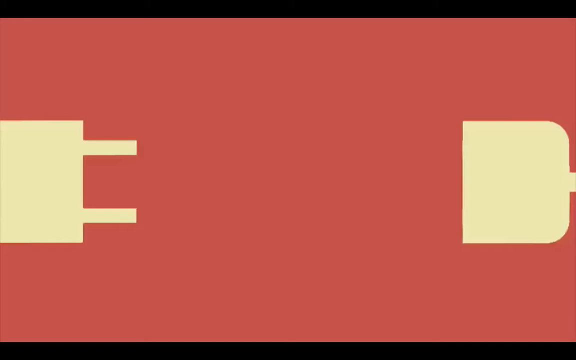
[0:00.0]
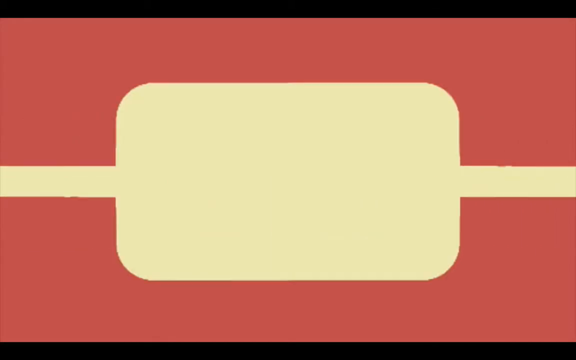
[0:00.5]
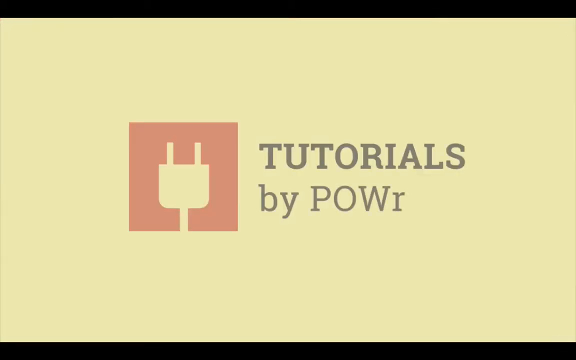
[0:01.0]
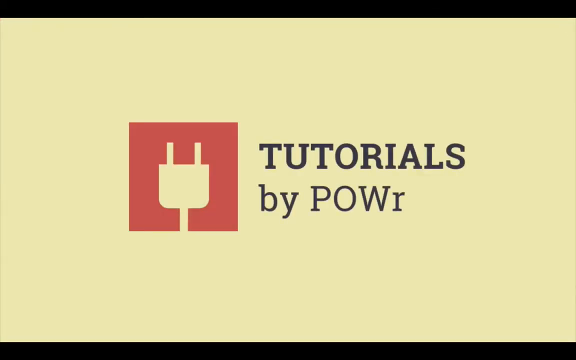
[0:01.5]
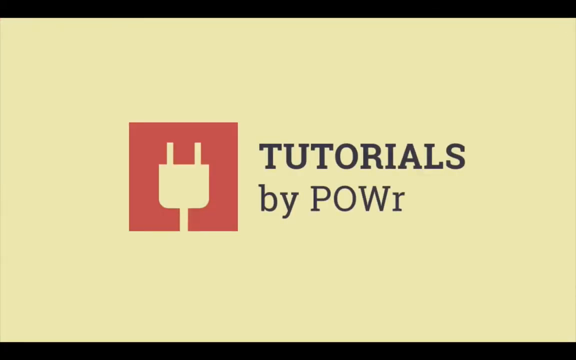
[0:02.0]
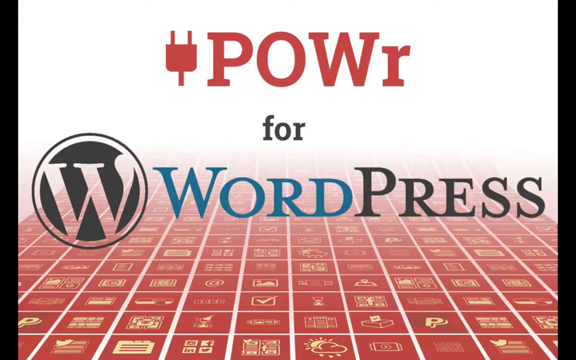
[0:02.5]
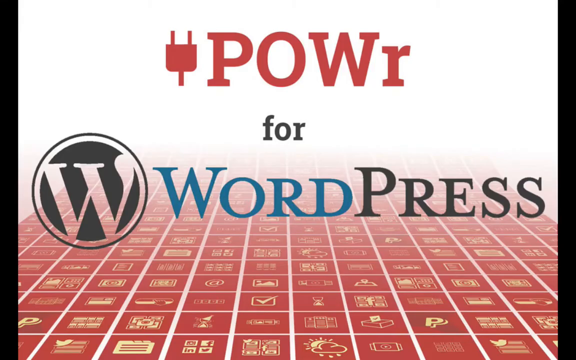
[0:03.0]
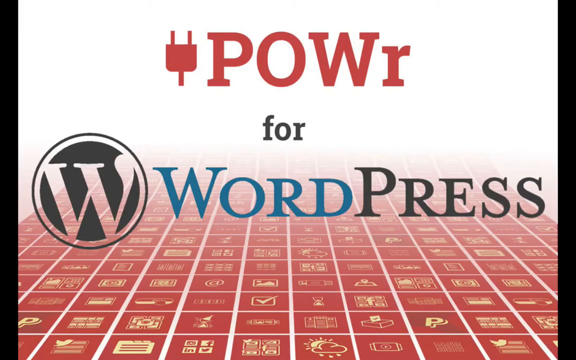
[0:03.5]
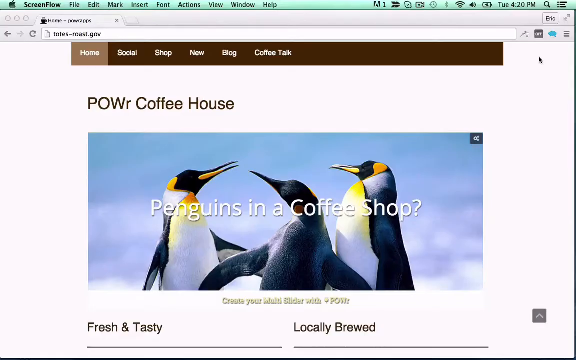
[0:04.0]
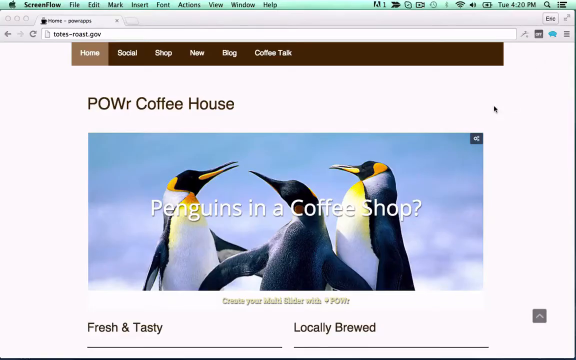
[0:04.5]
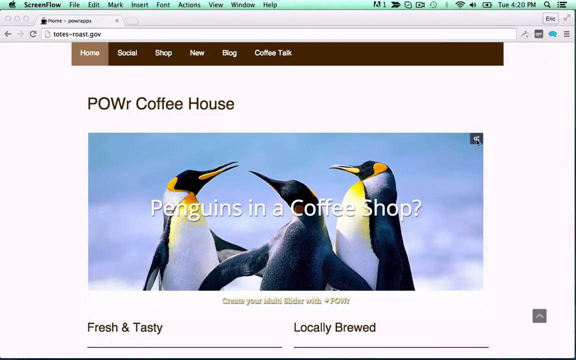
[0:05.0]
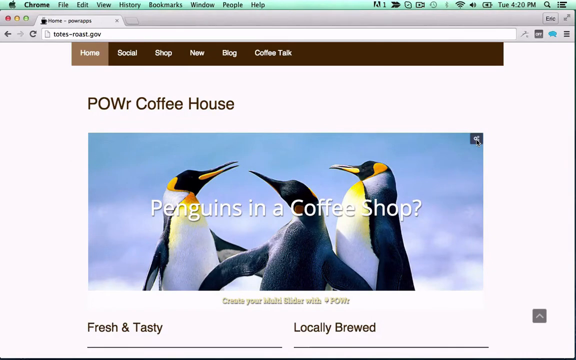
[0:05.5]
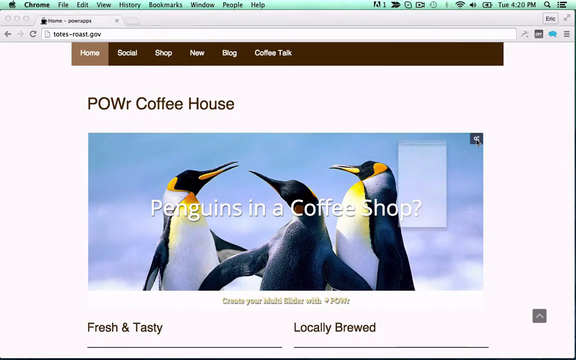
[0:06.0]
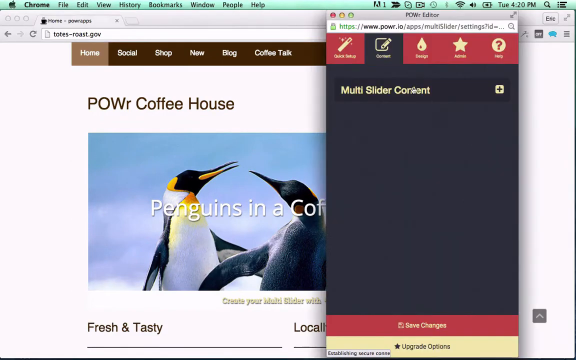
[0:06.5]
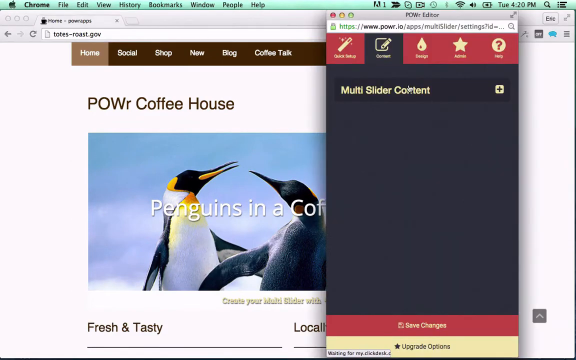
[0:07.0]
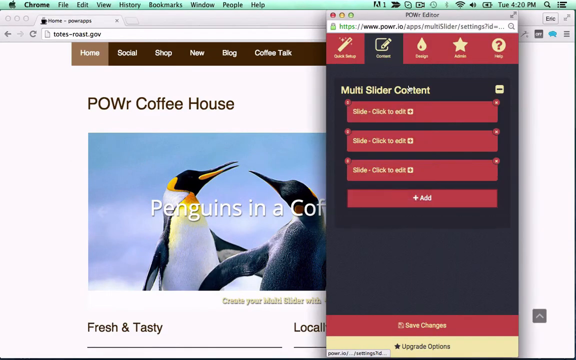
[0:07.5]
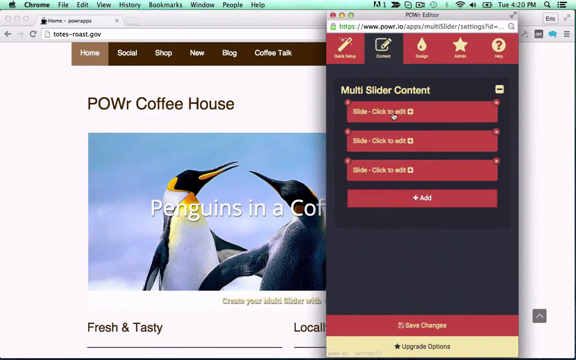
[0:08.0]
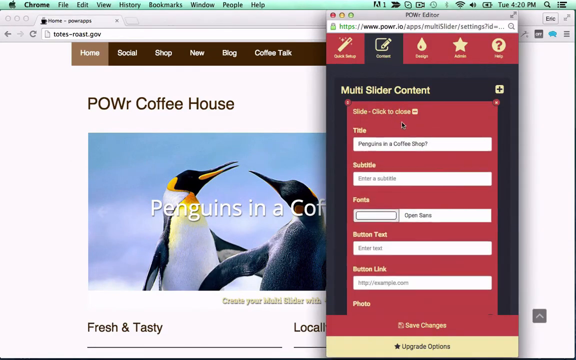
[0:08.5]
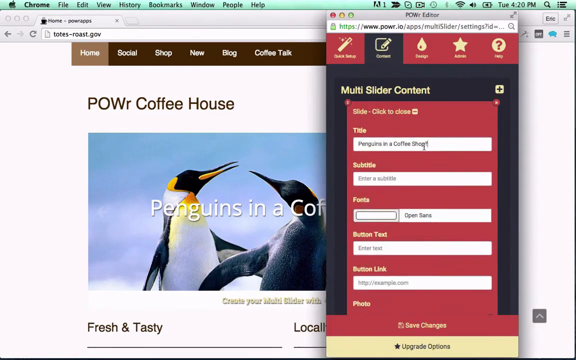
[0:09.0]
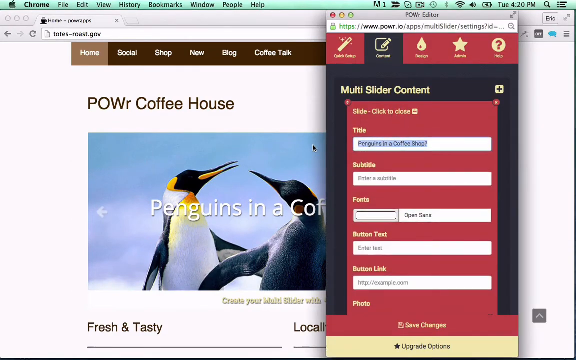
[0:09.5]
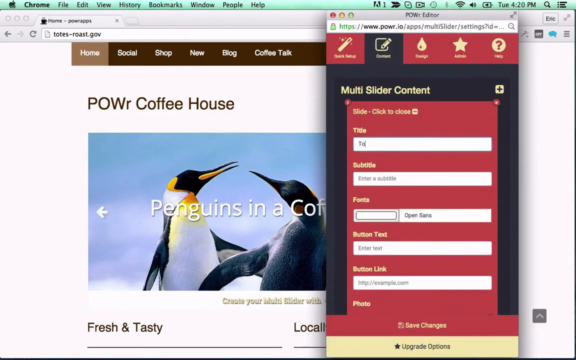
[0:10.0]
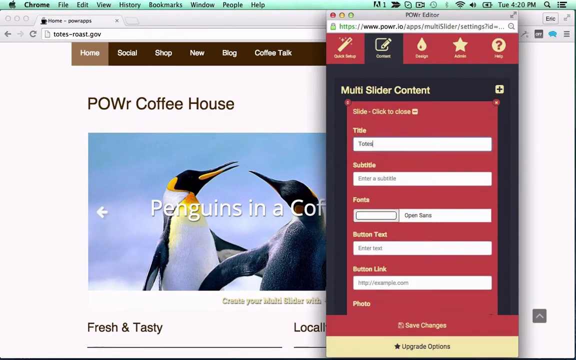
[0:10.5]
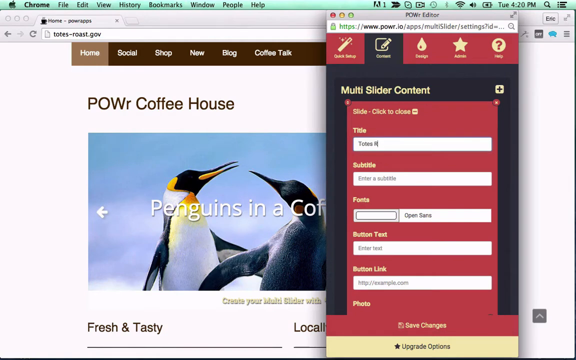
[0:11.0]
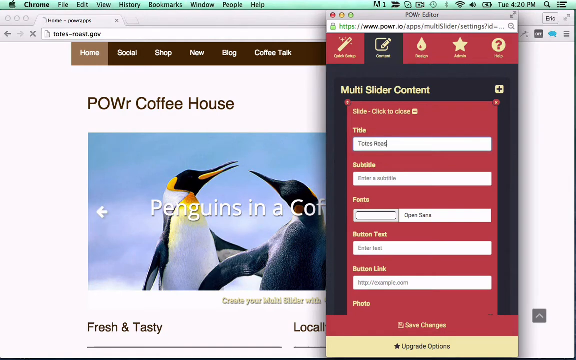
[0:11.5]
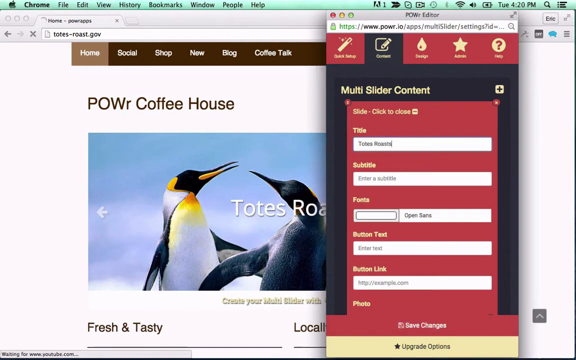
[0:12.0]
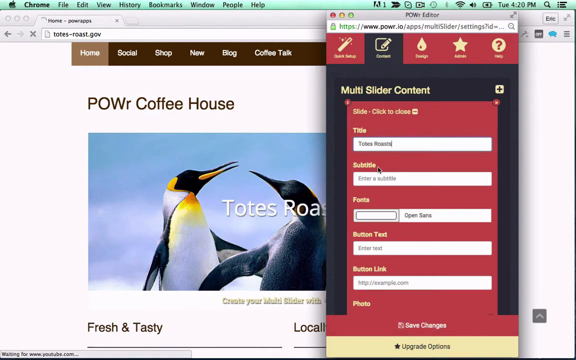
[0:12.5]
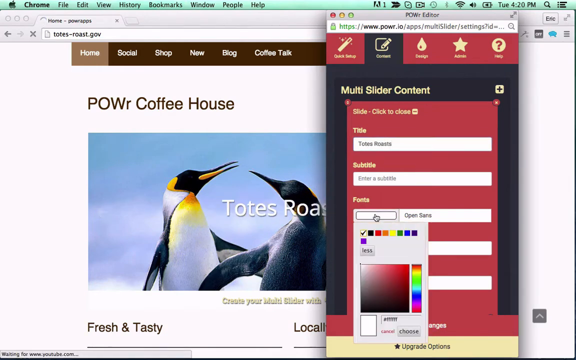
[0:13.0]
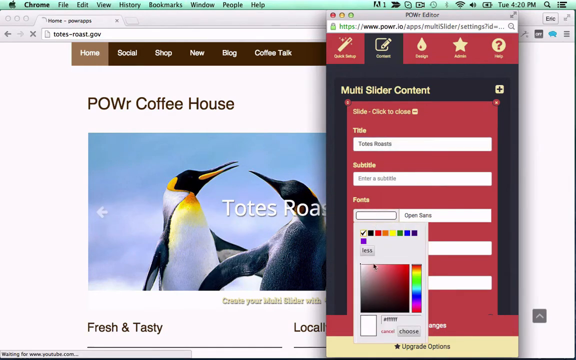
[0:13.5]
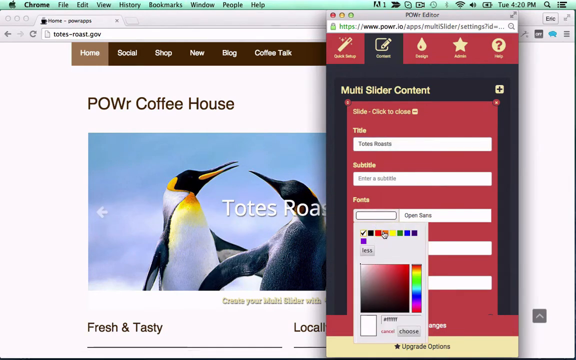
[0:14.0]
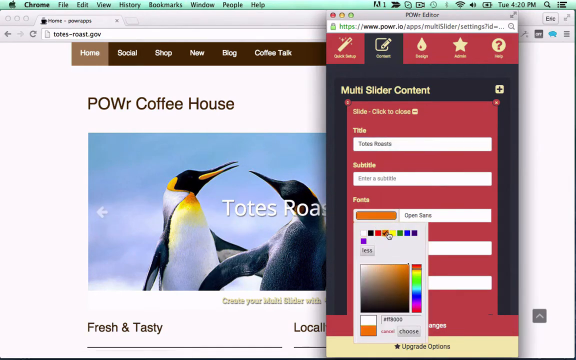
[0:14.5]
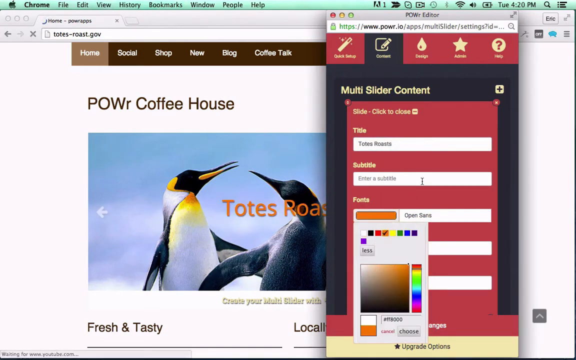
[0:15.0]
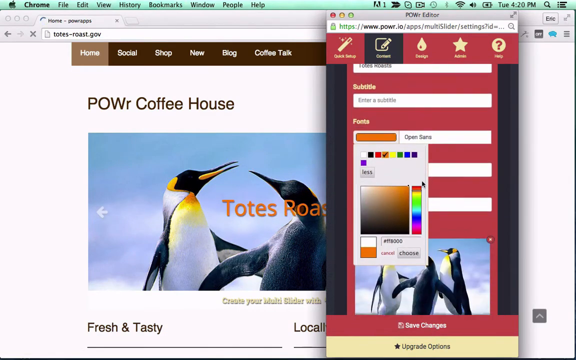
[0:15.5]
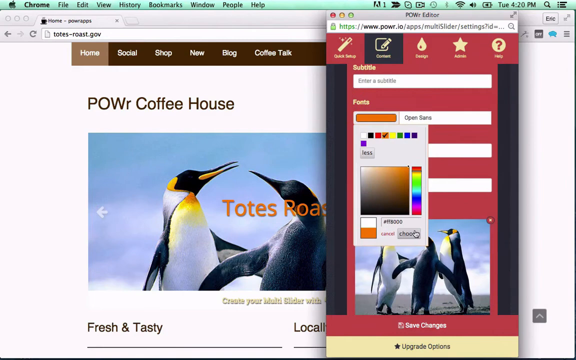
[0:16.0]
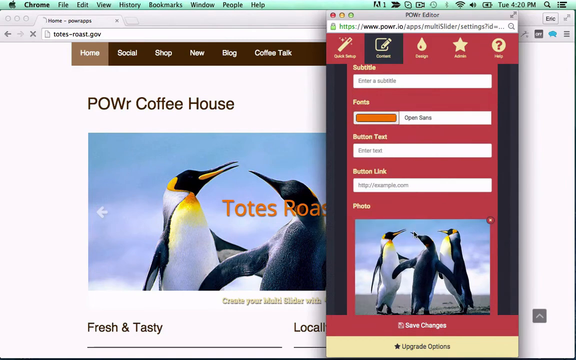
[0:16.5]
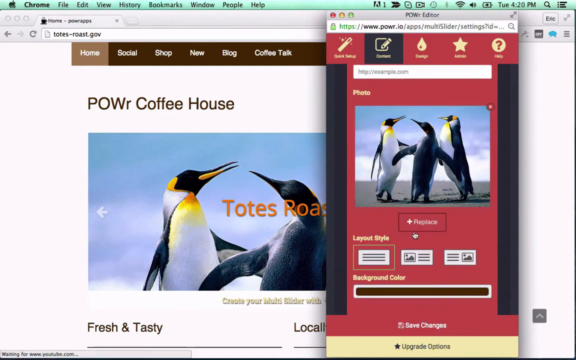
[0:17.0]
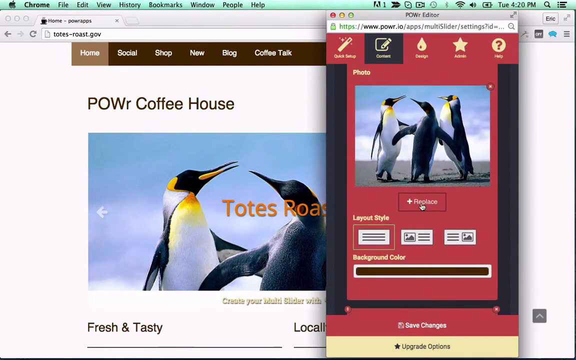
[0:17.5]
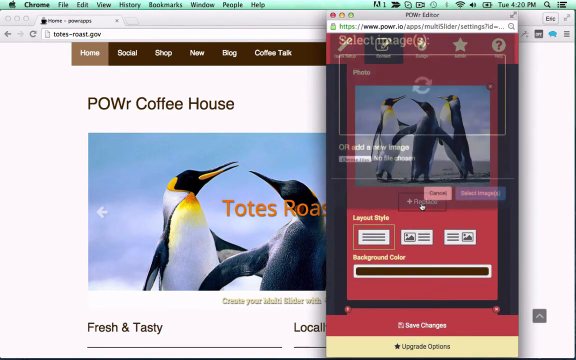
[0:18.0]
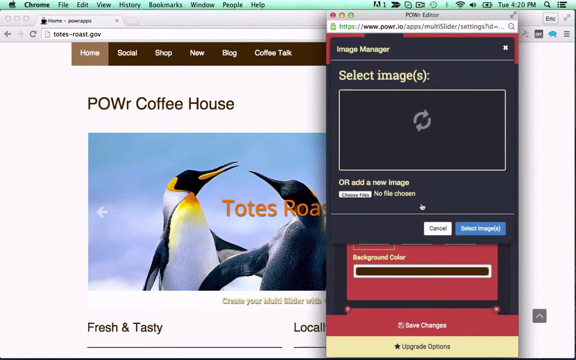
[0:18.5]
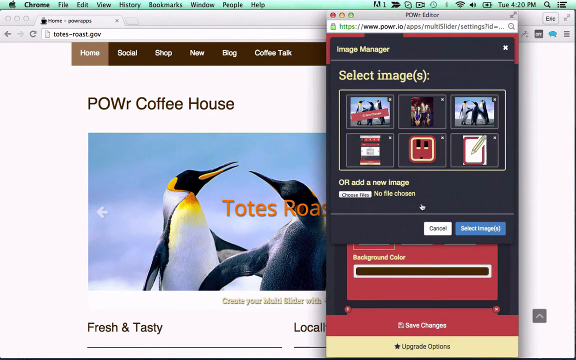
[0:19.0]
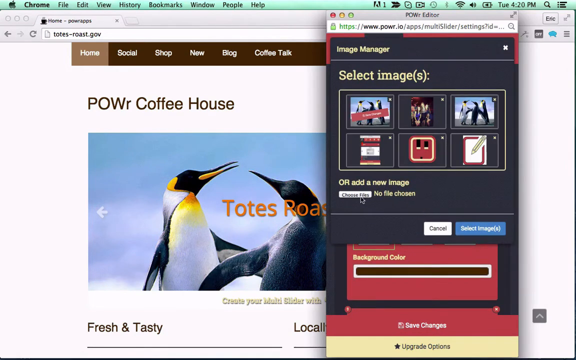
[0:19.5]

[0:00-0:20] A kind of diagram or drawing of a plug appears on the left, and on the right is something almost like the outlet the plug will be plugged into. The whole background is red, and these areas are yellow. As the video moves forward, the plug and outlet connect, and text reads "tutorials by POWr," with "POW" in capitals and the "r" in lowercase. Next, text reads "POWr for wordpress," followed by "POWr coffee house" and "penguins in a coffee shop." A multi slider content section then appears, and someone moves up and down, highlighting and changing a section so that it reads "totes roast"; the penguin picture is still used, but the words on that section in the background have been changed.